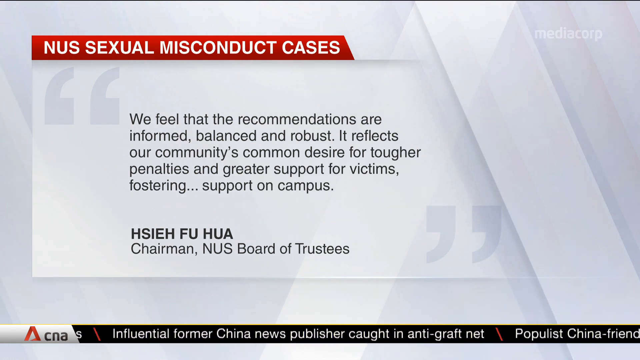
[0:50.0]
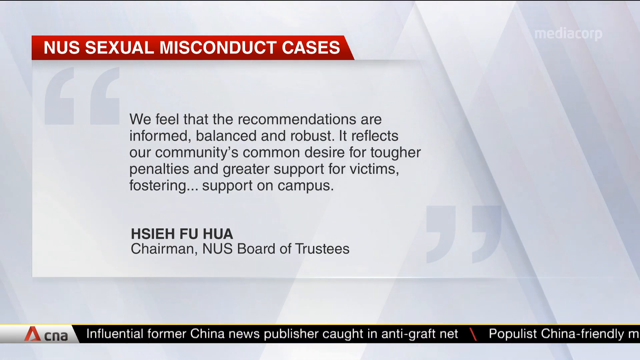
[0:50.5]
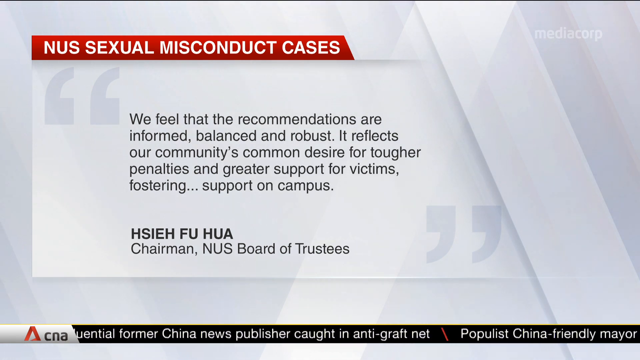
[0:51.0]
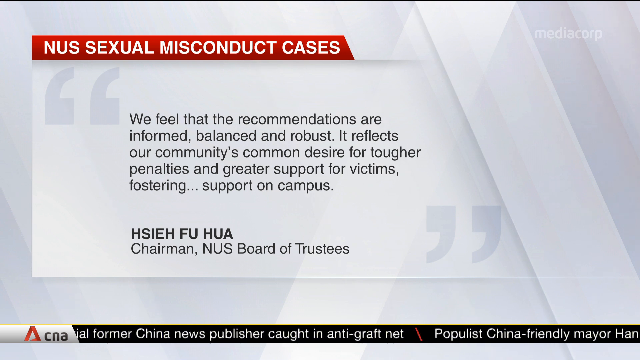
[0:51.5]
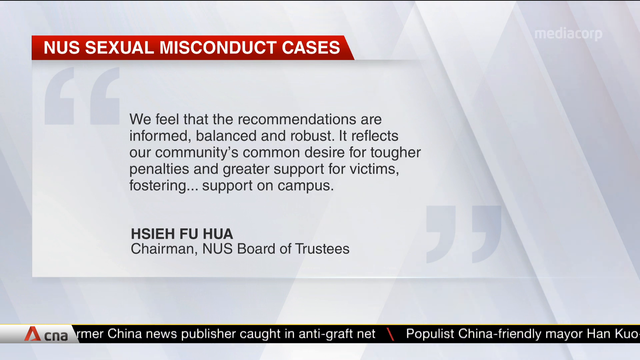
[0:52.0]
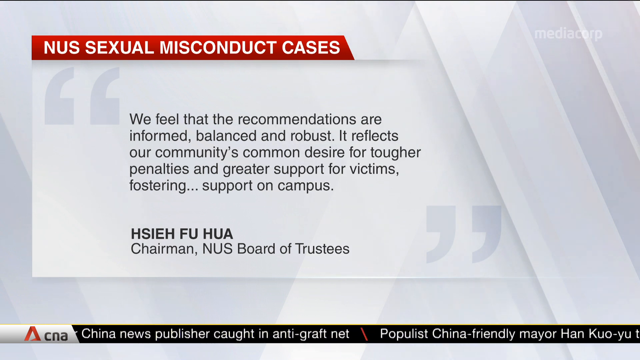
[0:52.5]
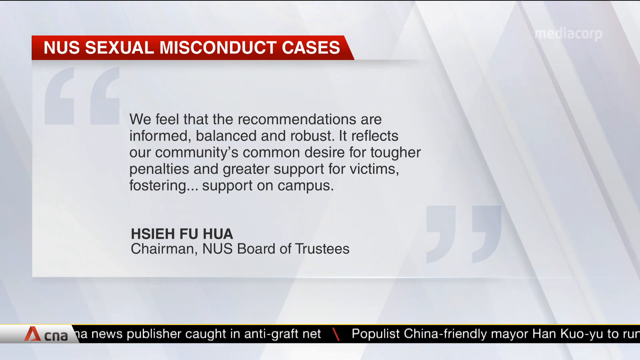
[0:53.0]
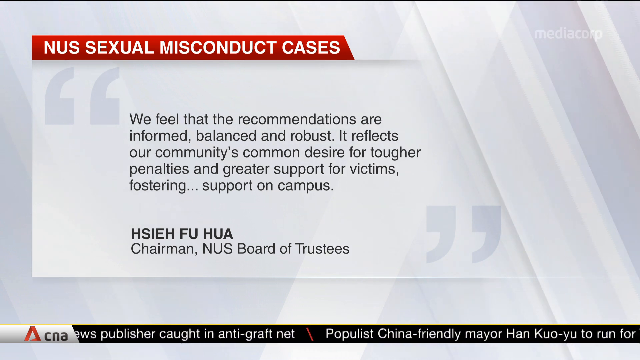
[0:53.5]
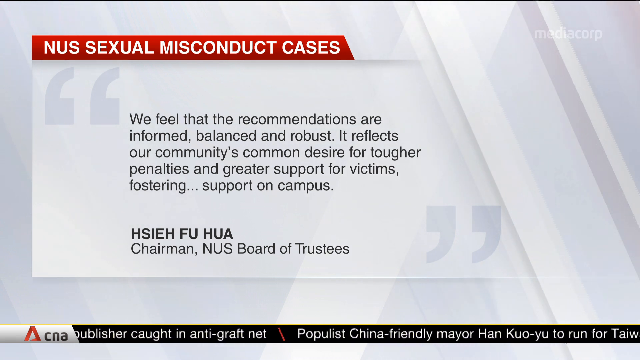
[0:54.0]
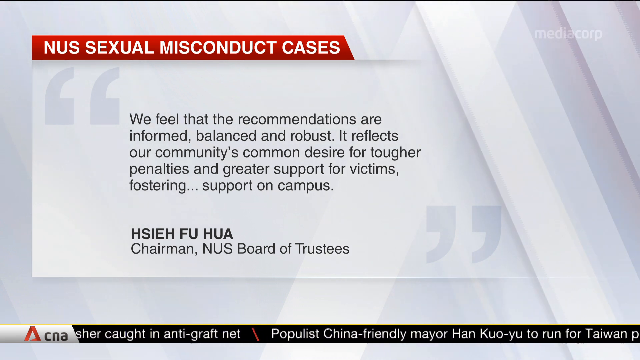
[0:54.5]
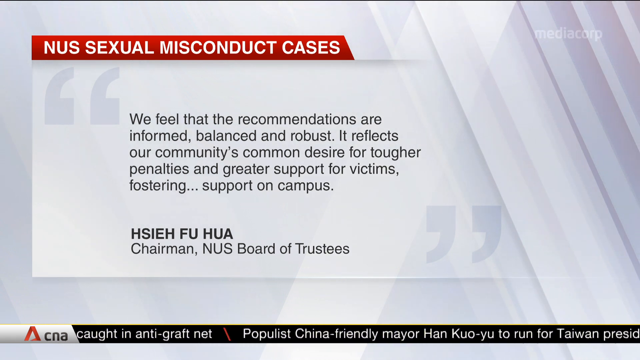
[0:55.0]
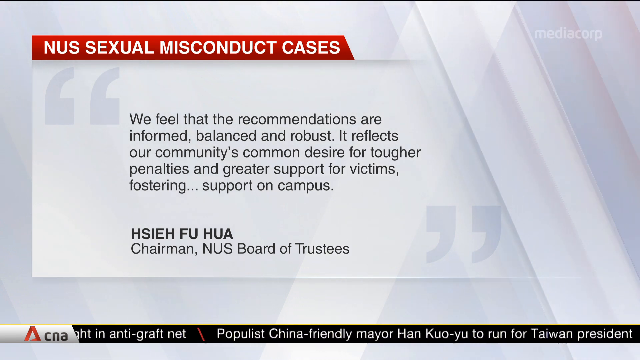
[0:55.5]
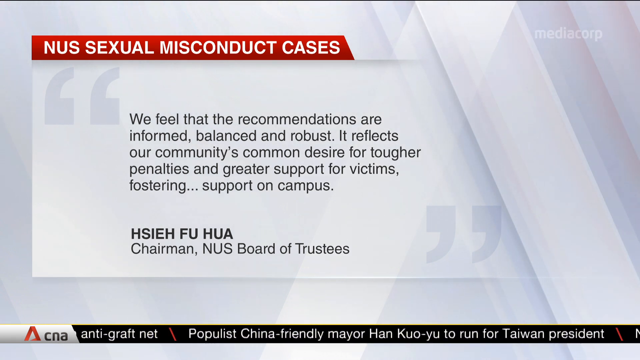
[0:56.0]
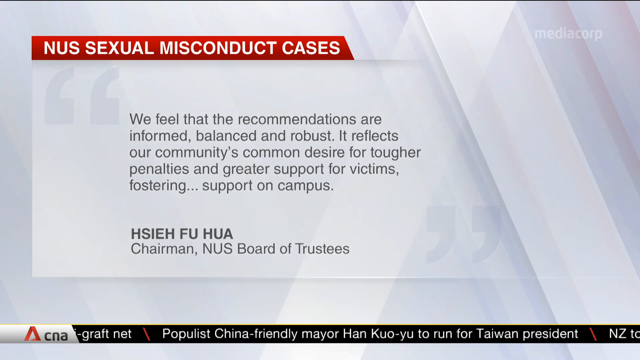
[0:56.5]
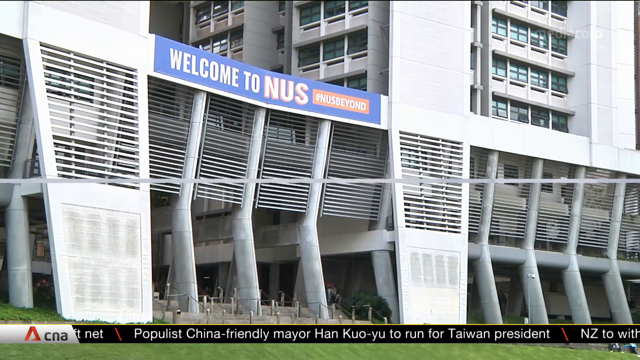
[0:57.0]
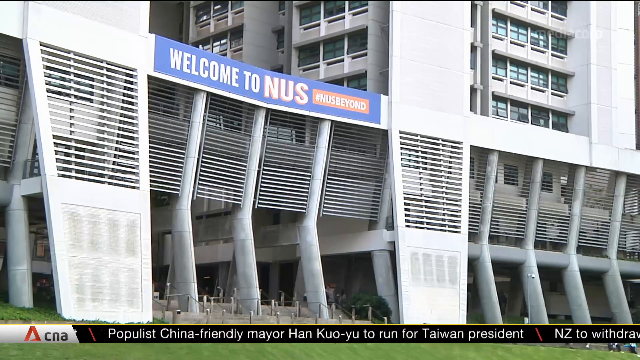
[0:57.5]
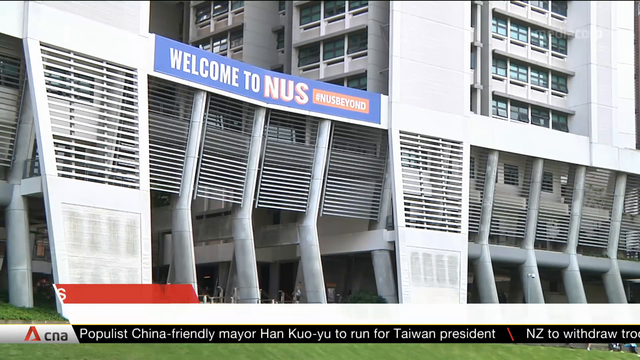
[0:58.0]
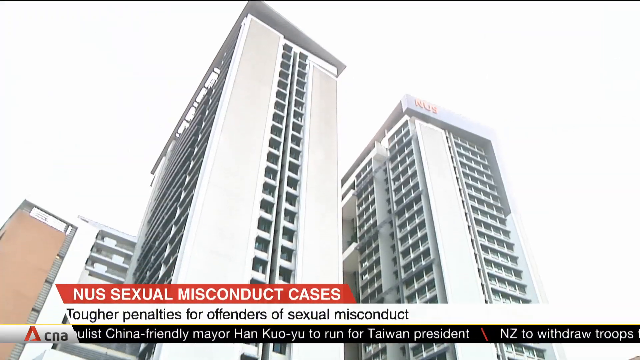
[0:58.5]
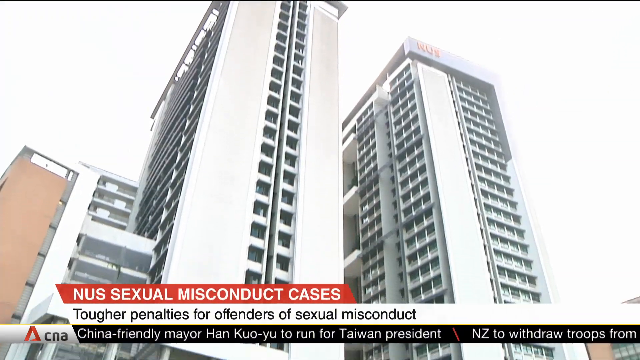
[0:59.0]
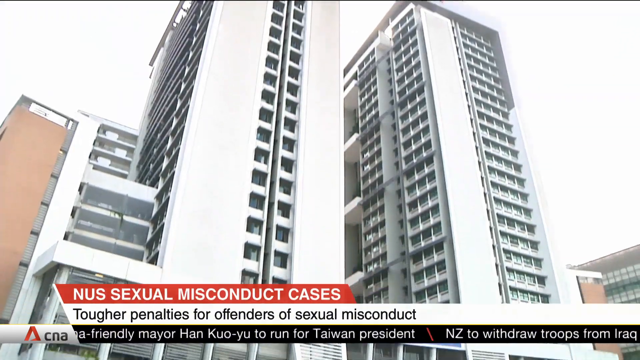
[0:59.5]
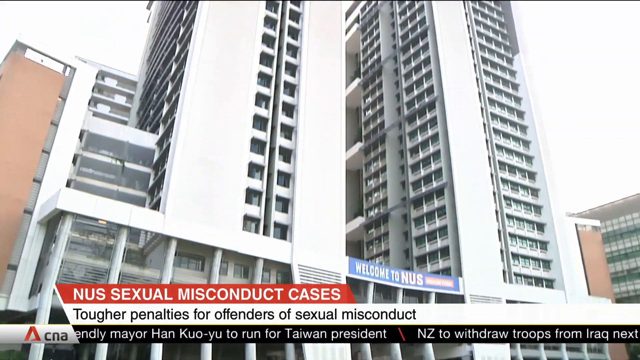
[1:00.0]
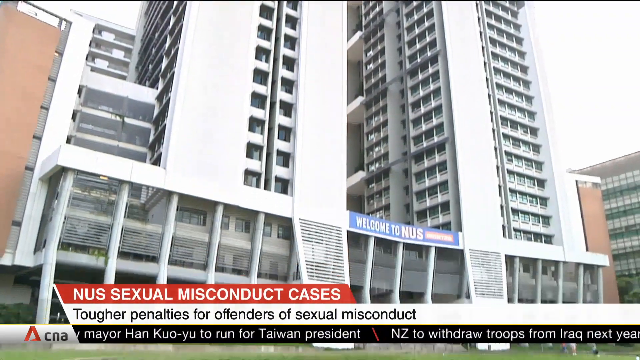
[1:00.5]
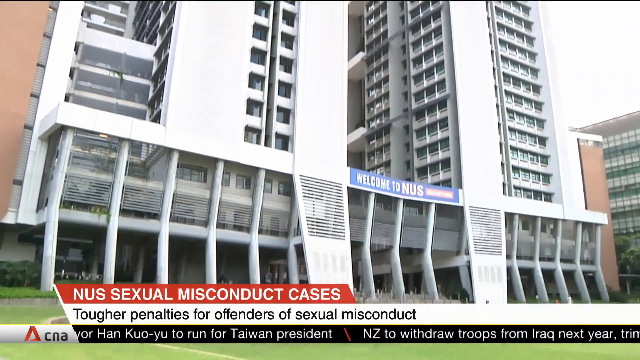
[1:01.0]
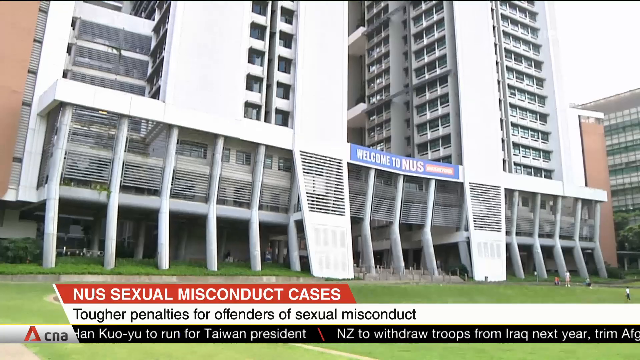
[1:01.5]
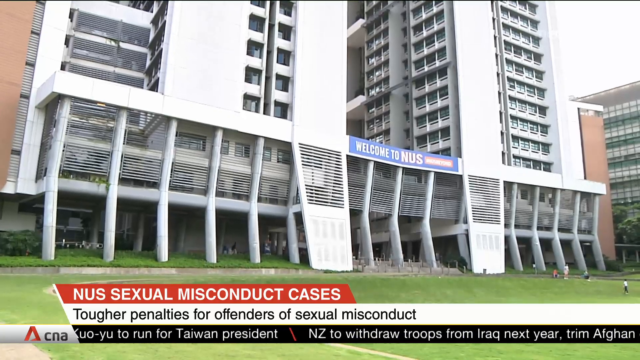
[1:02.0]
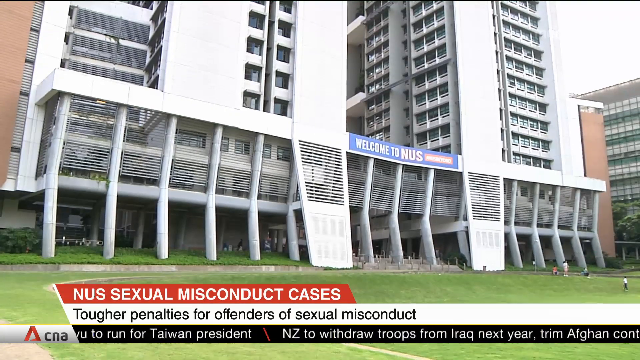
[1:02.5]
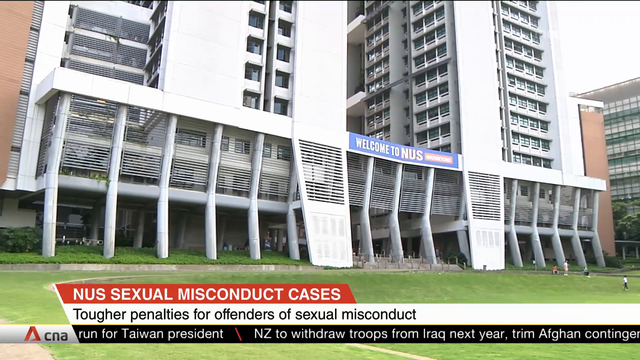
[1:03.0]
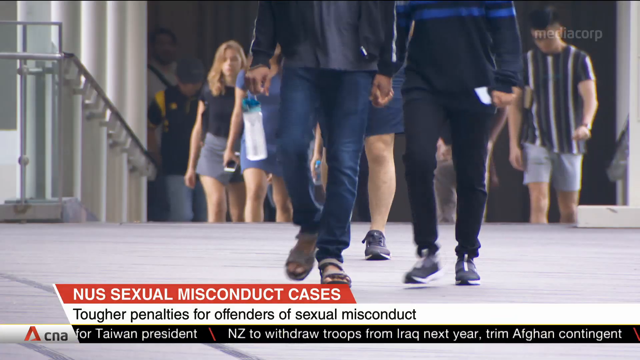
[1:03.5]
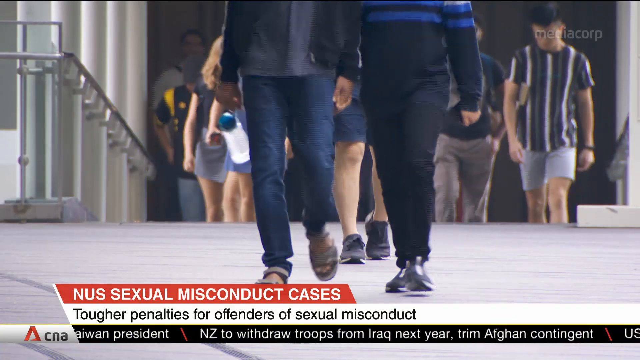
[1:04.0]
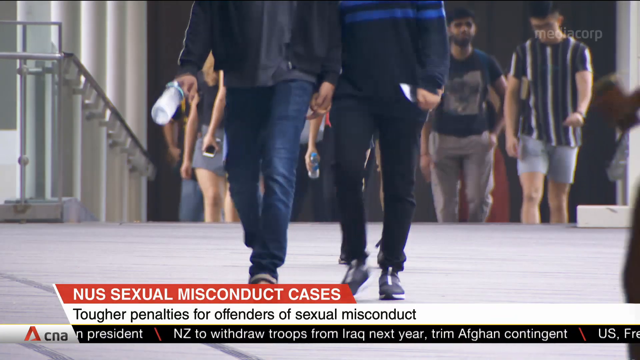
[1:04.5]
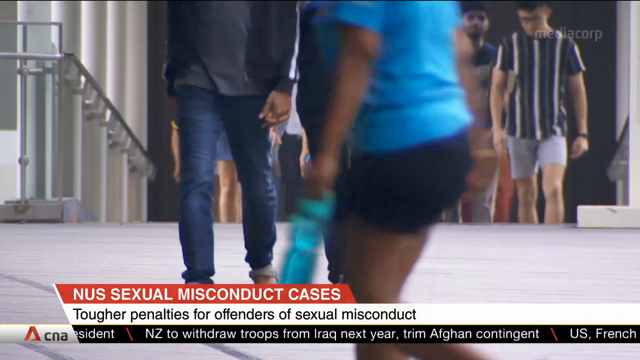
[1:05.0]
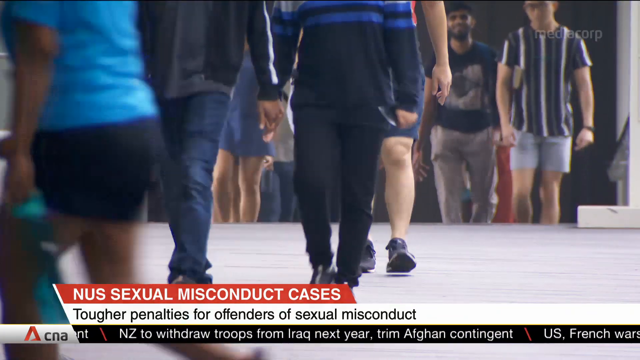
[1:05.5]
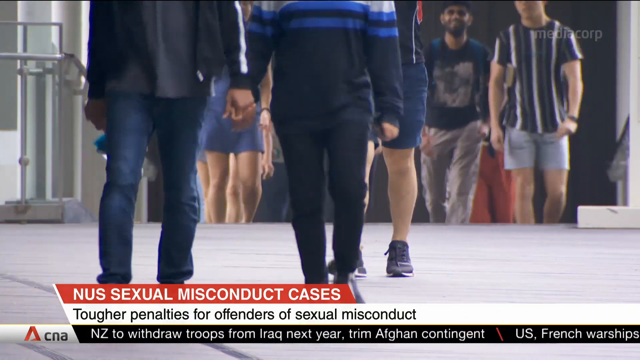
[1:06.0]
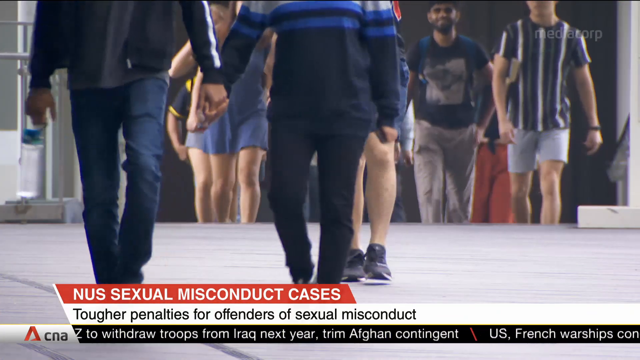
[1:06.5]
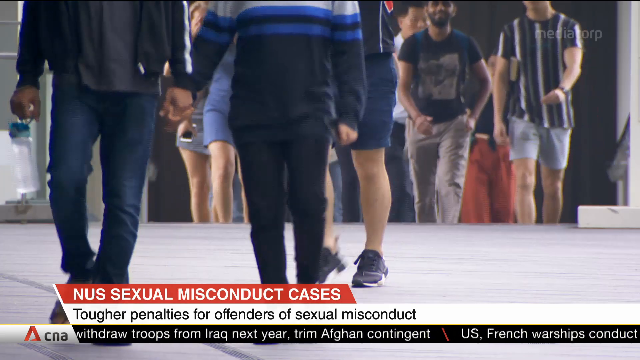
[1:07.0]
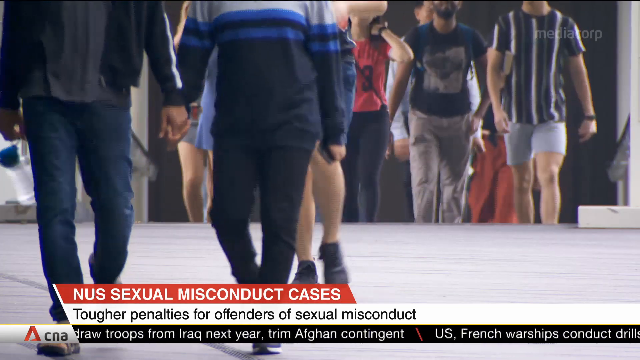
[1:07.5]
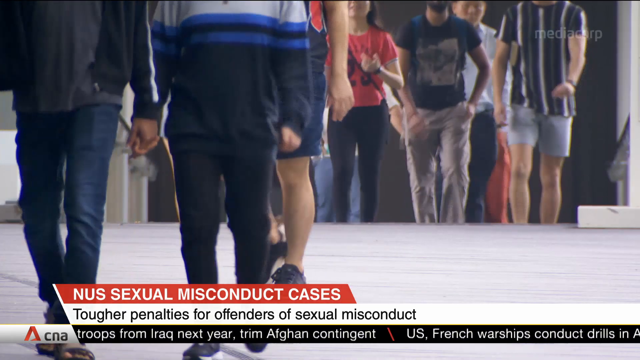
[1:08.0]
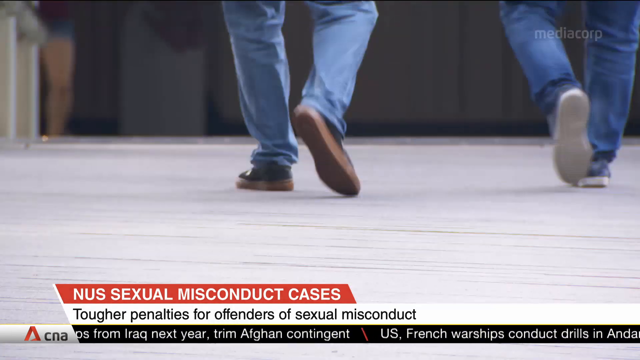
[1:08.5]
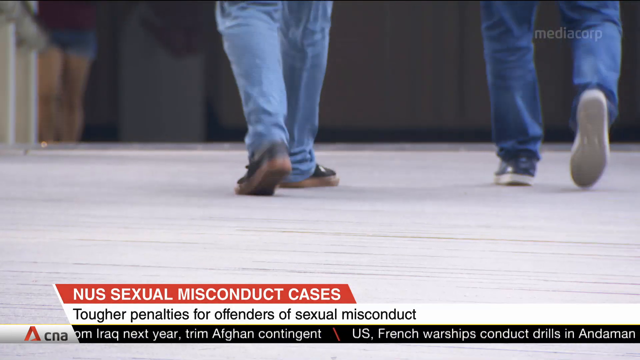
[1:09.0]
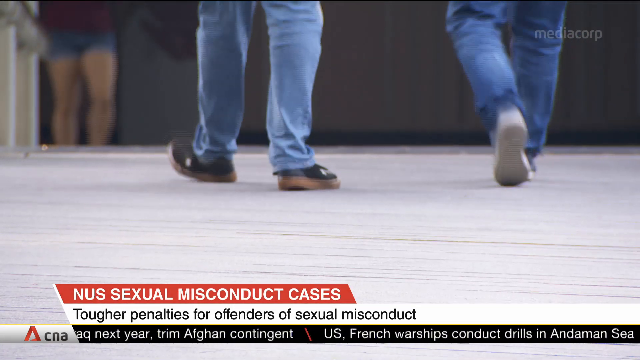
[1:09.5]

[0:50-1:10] "NUS sexual misconduct cases" appears in red, and underneath is a quote from the chairman of the NUS Board of Trustees that reads: "We feel that the recommendations are informed, balanced, and robust. It reflects our community's common desire for tougher penalties and greater support for victims fostering support on campus." Next comes what seems to be a tall building that says "welcome to NUS," with people walking inside it. The people are young, apparently youth; they walk and talk, some discussing things and some in a hurry.